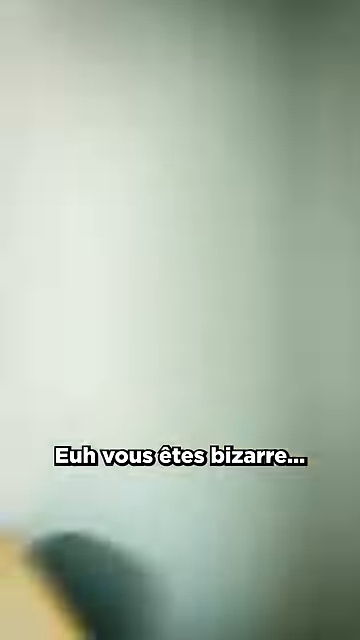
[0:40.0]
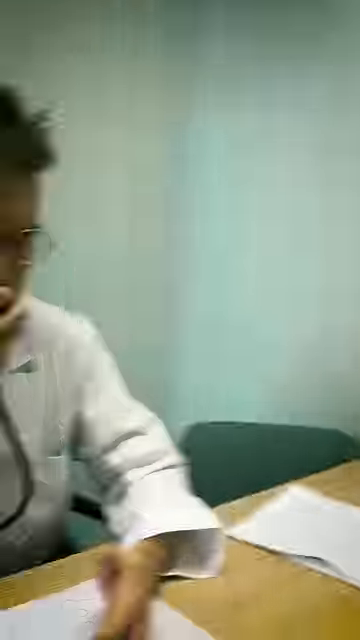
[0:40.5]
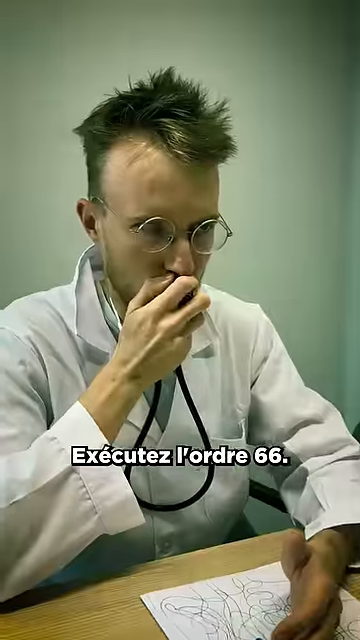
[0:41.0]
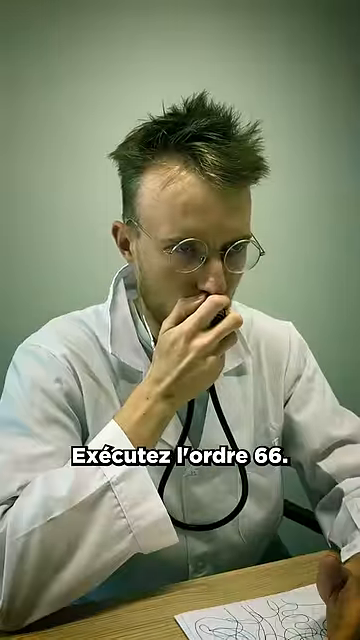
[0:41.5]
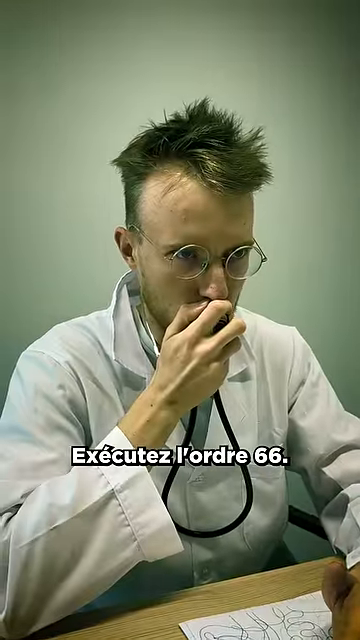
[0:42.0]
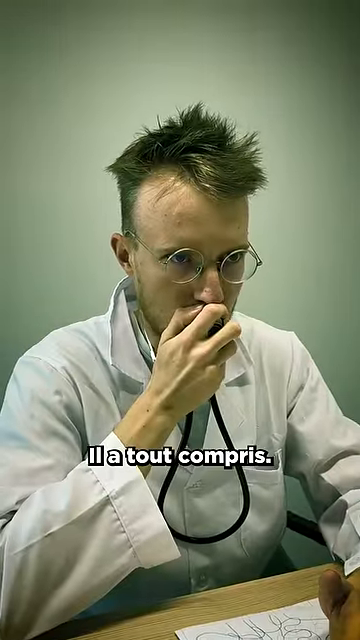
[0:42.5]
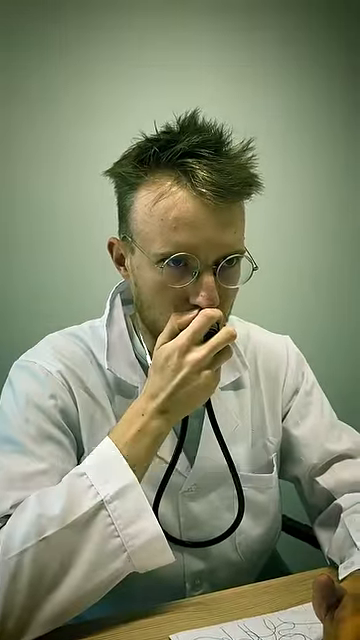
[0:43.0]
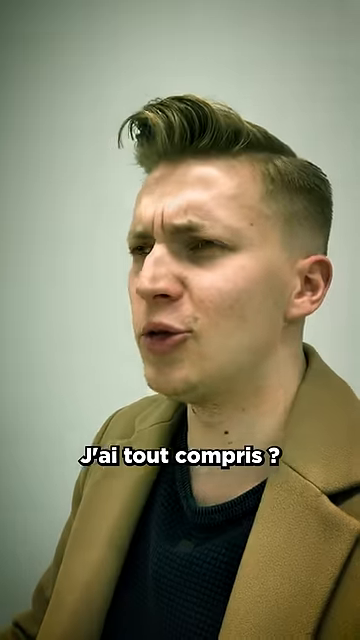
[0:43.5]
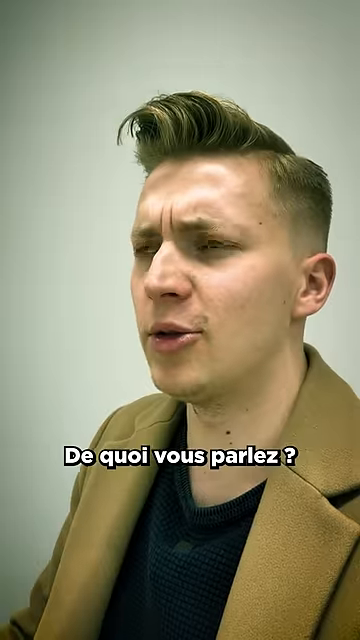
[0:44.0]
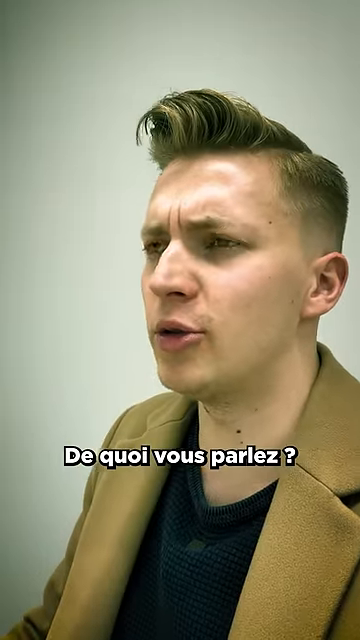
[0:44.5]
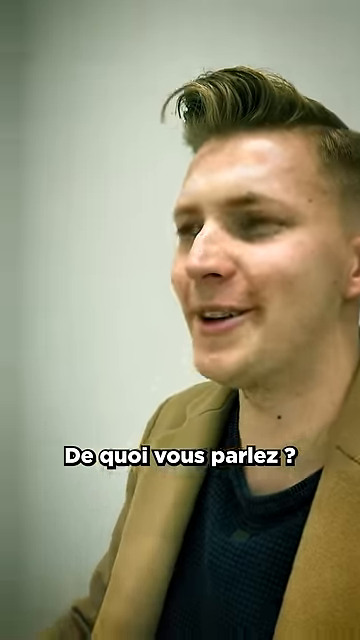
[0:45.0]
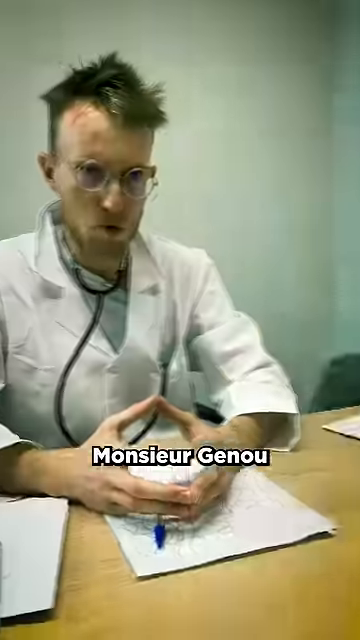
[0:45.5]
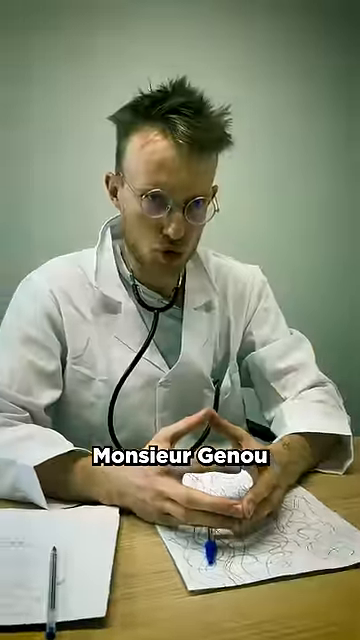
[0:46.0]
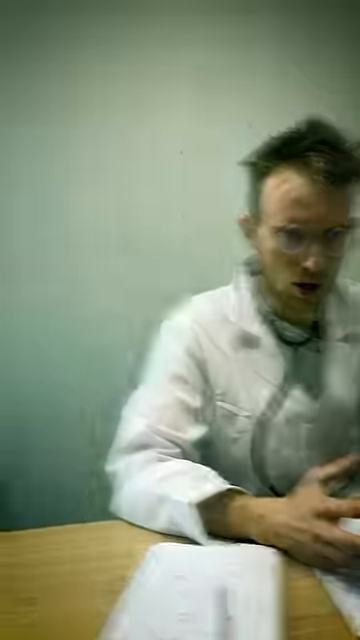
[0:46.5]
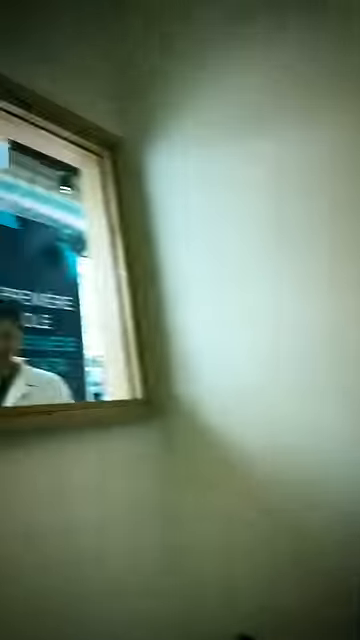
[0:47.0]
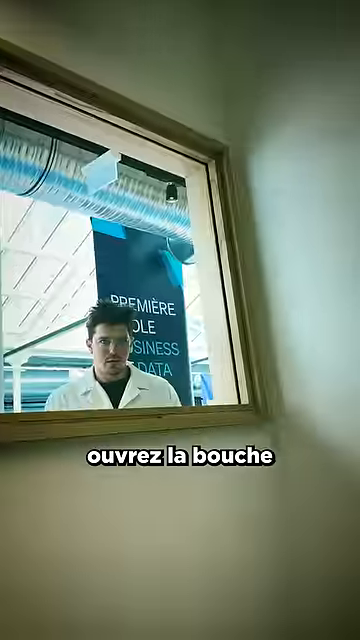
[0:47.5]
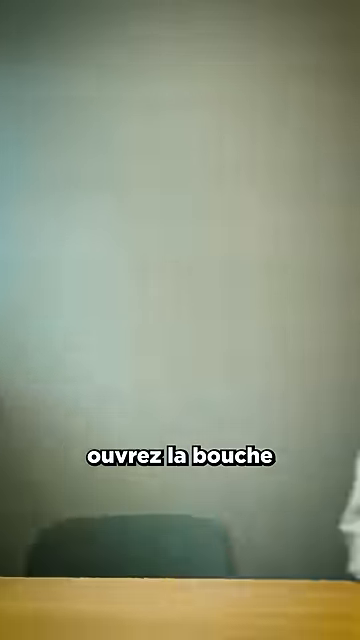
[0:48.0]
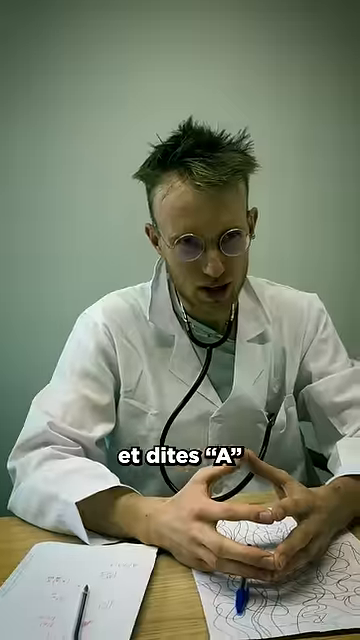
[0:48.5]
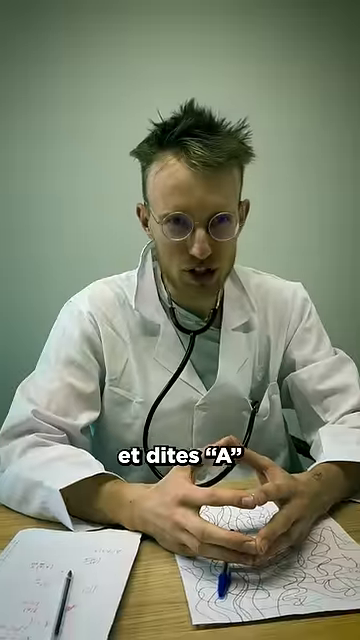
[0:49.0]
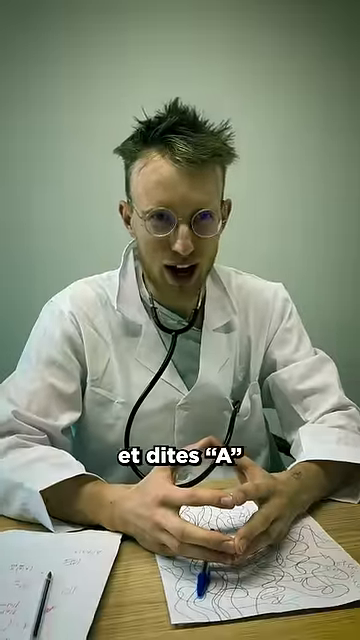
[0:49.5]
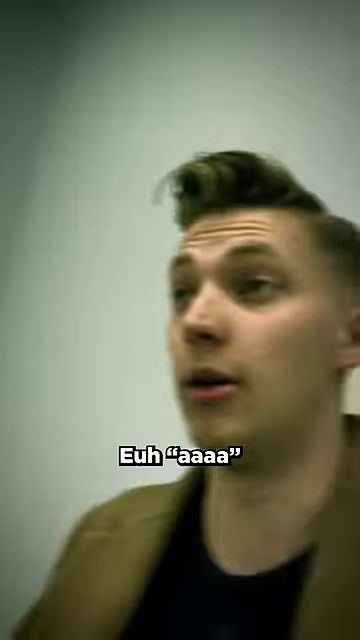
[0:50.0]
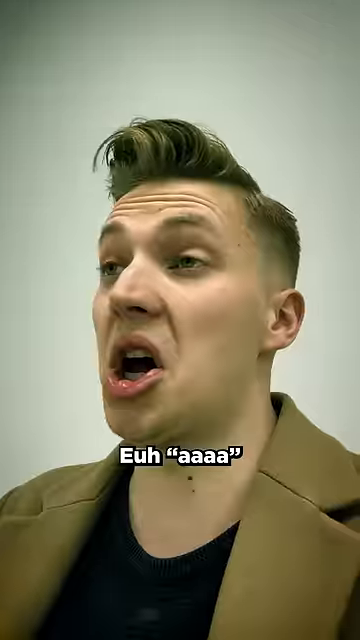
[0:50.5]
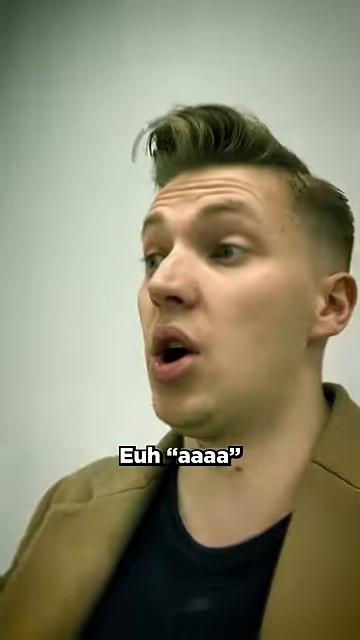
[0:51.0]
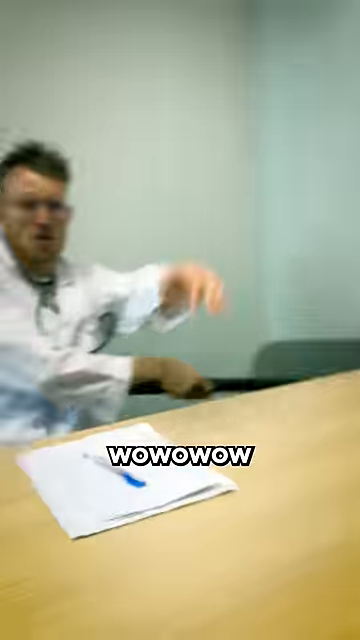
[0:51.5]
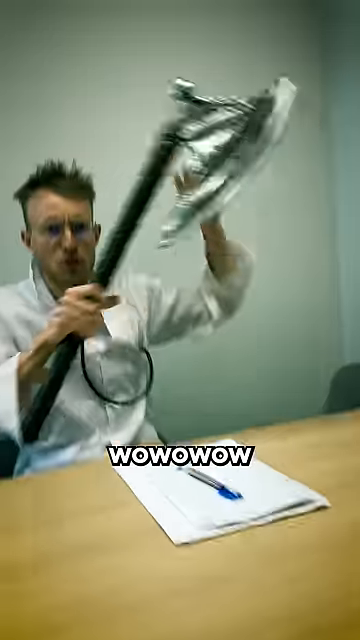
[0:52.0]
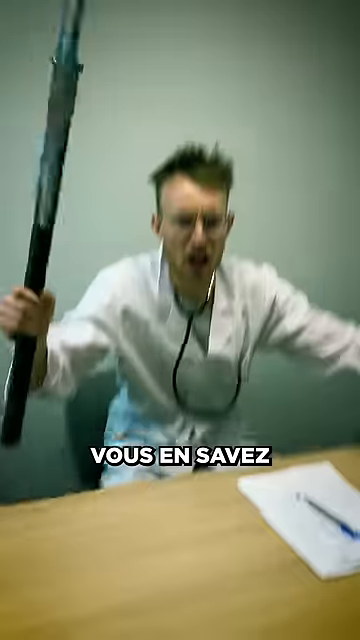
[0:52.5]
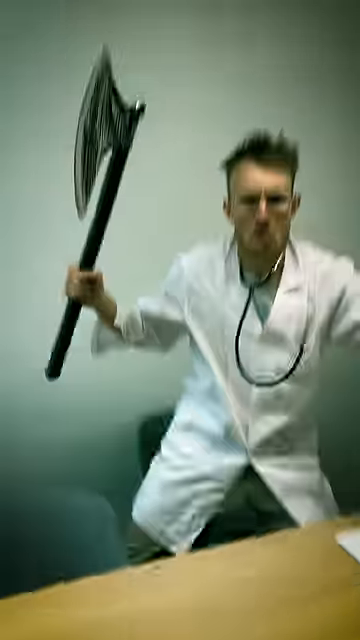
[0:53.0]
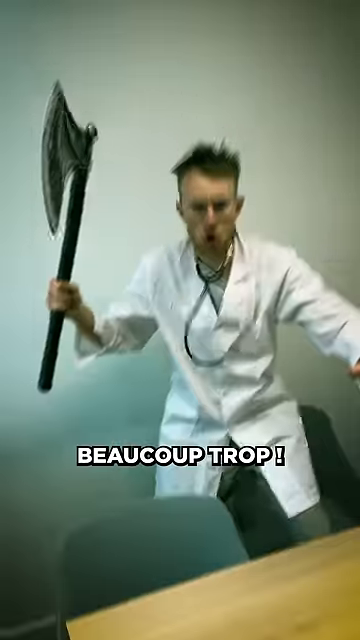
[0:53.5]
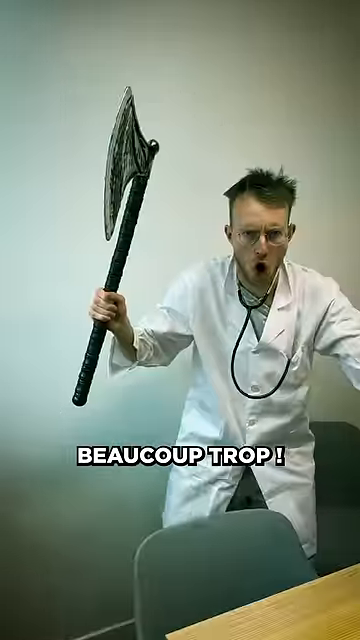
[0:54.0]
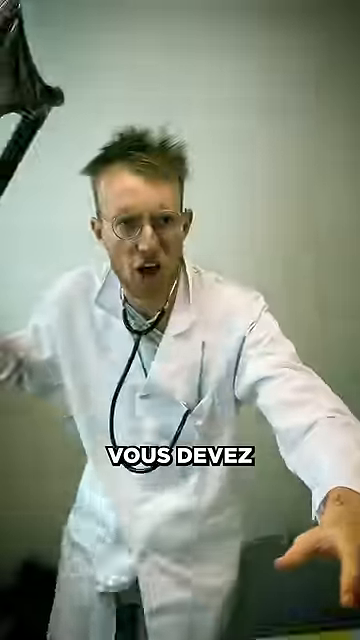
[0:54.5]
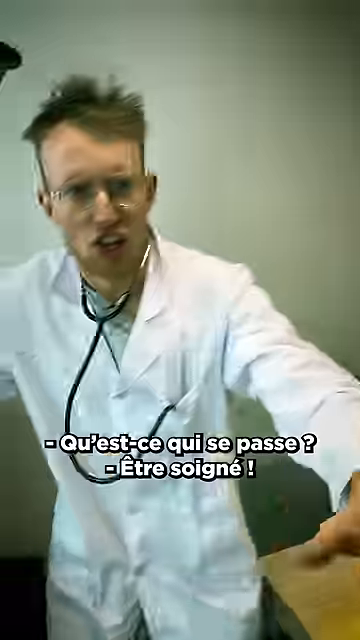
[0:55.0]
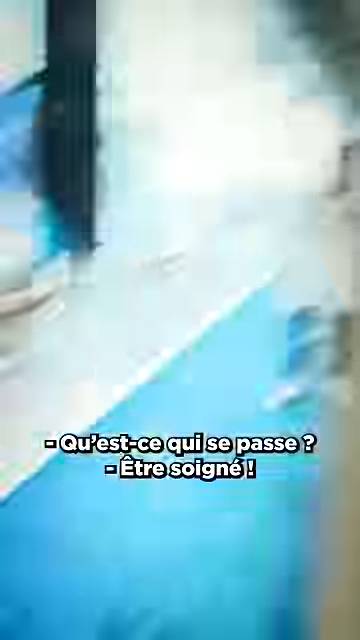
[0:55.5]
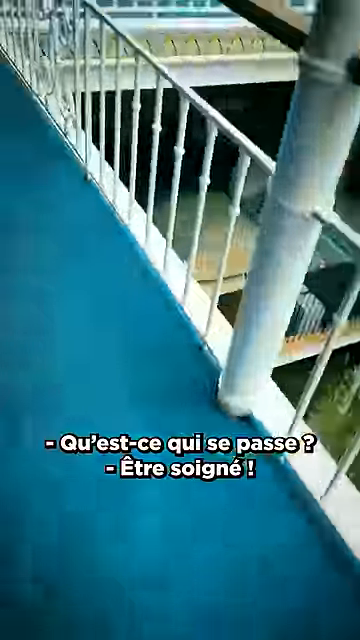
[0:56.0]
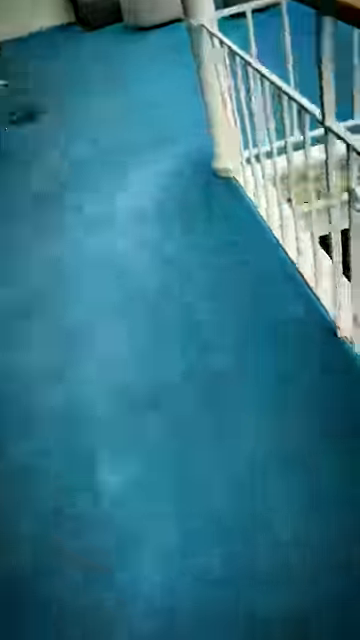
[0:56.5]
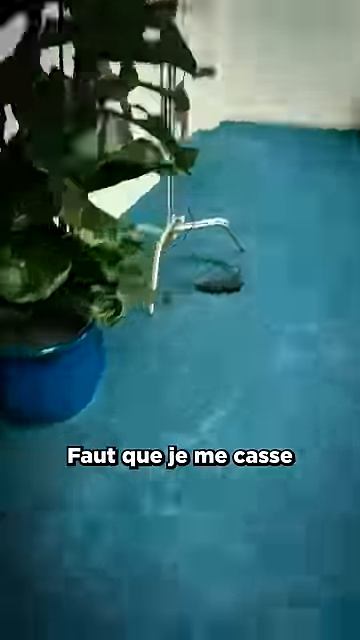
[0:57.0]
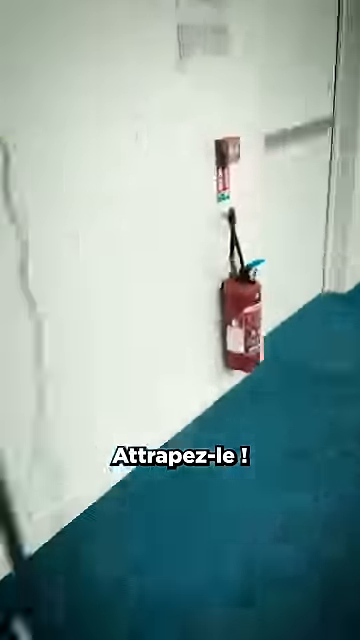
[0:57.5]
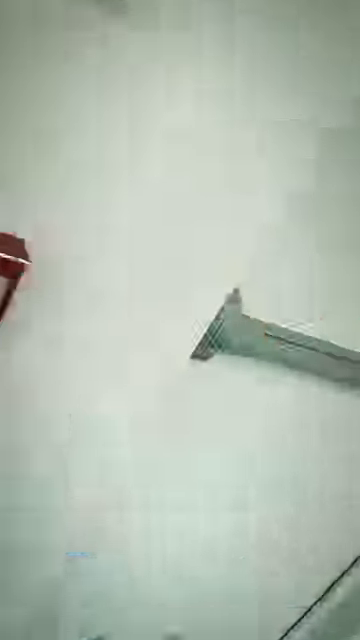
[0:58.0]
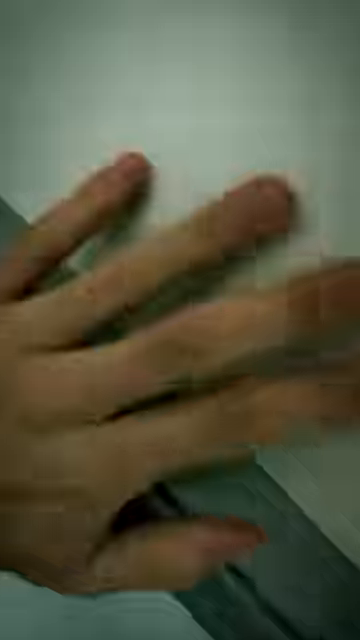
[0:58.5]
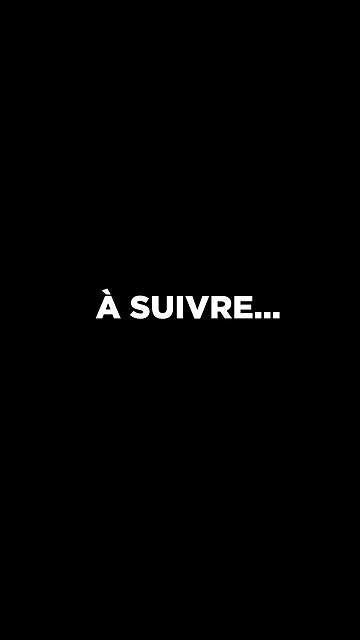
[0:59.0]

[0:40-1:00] The doctor, in a white lab coat and stethoscope, sits on one side of the table, and another man in a brown jacket sits on the other side. The captioning is in a foreign language. The doctor picks up an axe and appears to go after the other man, who runs away. Someone leaves the room and runs to the exit; it may be the doctor or the other man. Whoever is holding the camera runs outside, apparently the other man with the doctor chasing him. The video ends with a black screen and a word that looks like "survive".